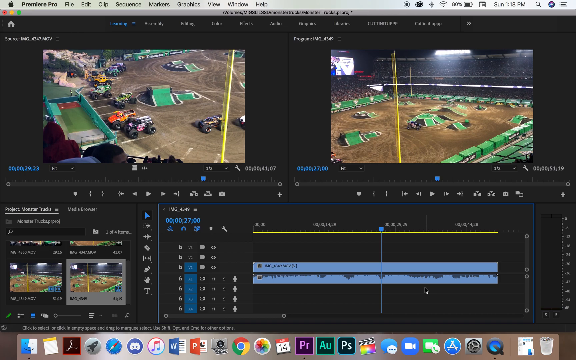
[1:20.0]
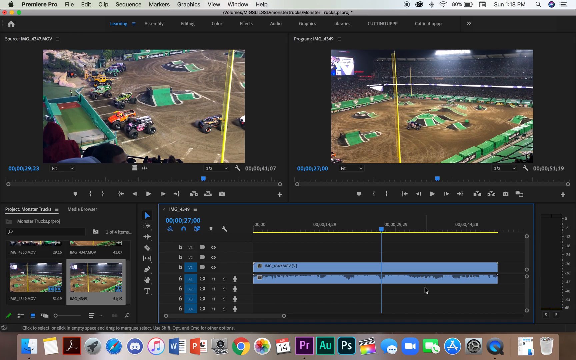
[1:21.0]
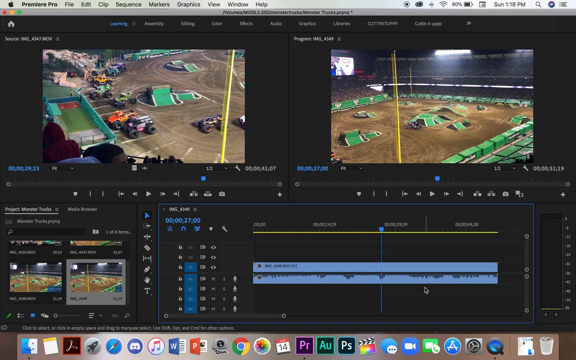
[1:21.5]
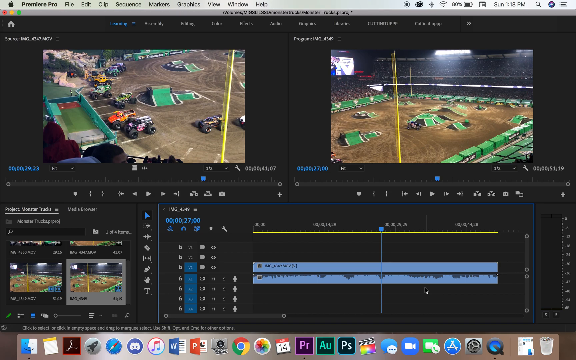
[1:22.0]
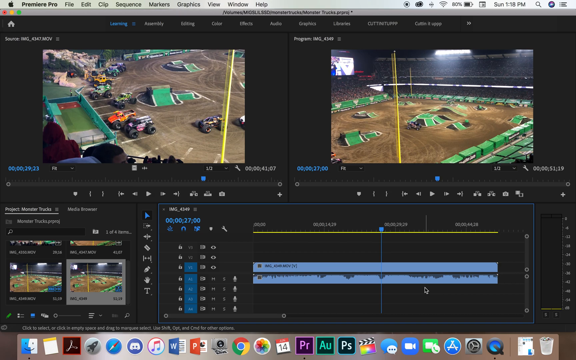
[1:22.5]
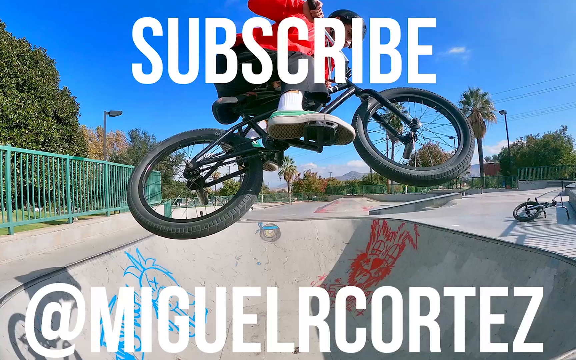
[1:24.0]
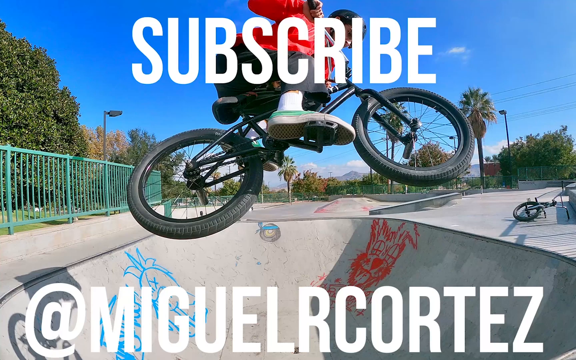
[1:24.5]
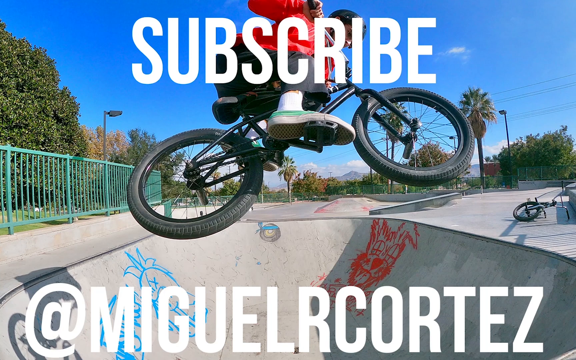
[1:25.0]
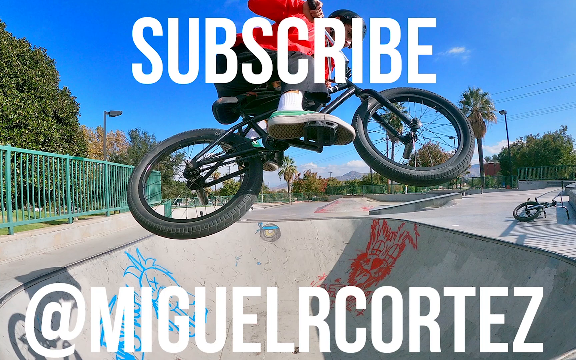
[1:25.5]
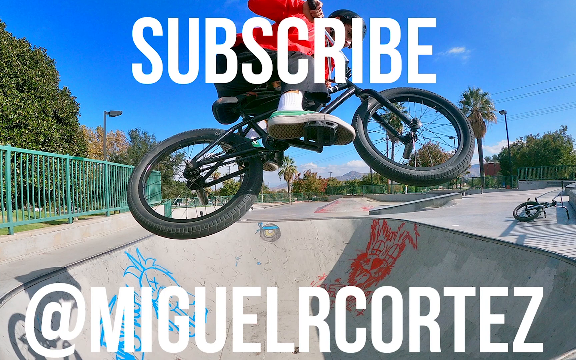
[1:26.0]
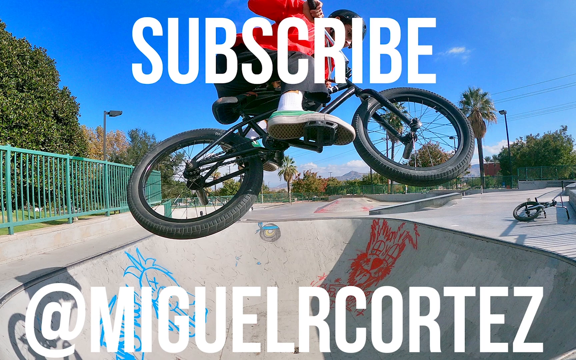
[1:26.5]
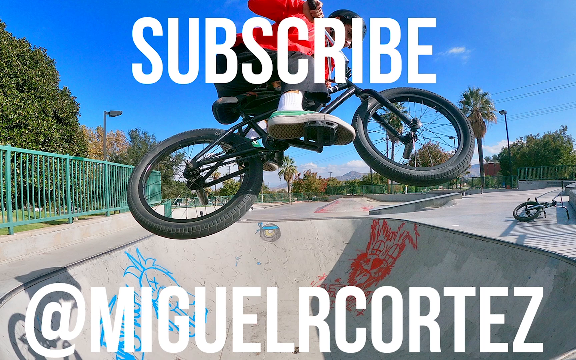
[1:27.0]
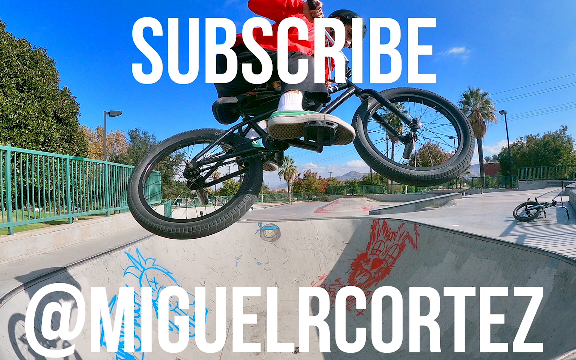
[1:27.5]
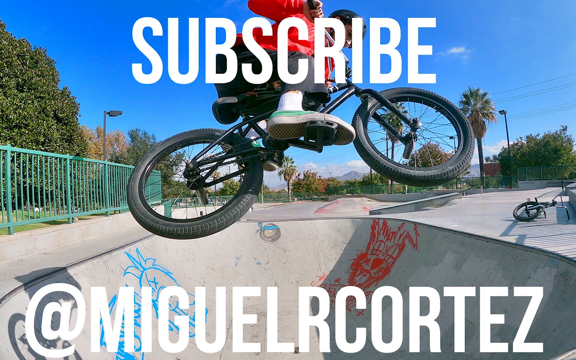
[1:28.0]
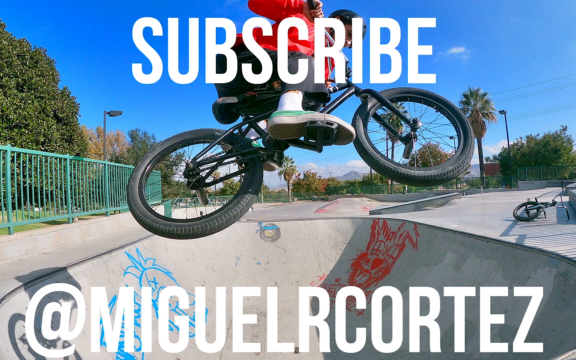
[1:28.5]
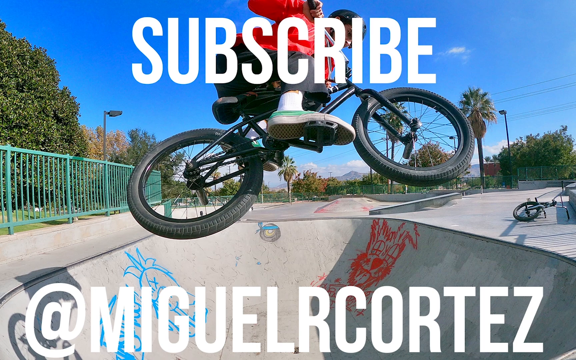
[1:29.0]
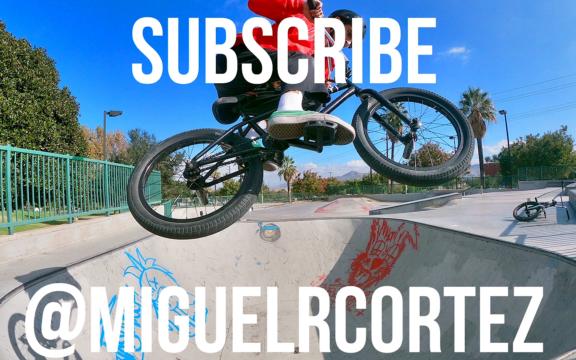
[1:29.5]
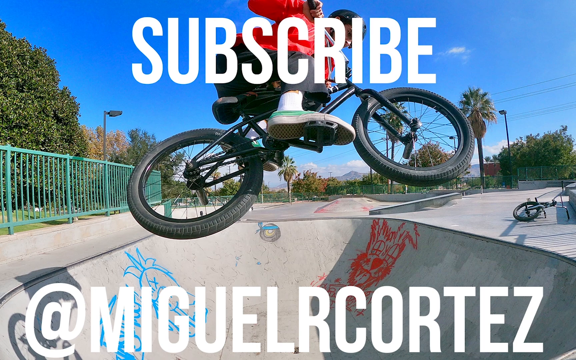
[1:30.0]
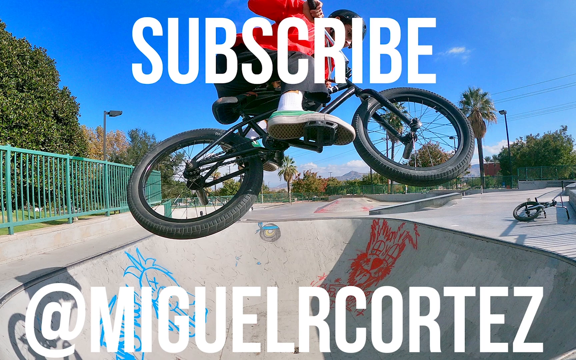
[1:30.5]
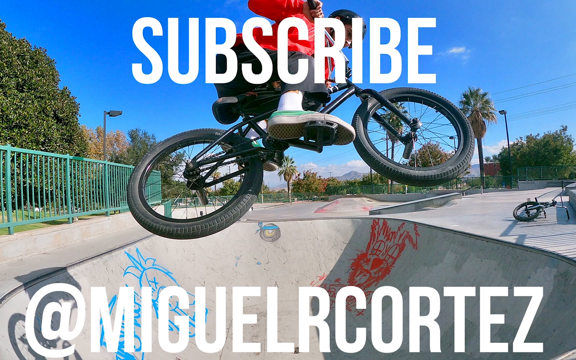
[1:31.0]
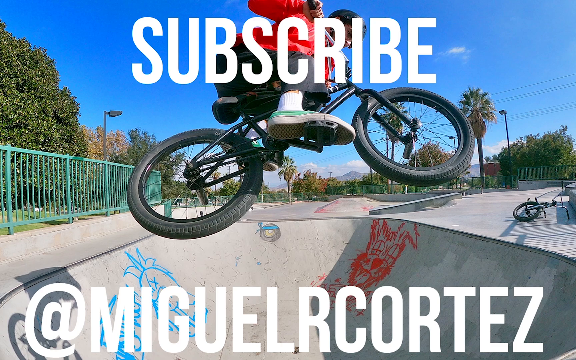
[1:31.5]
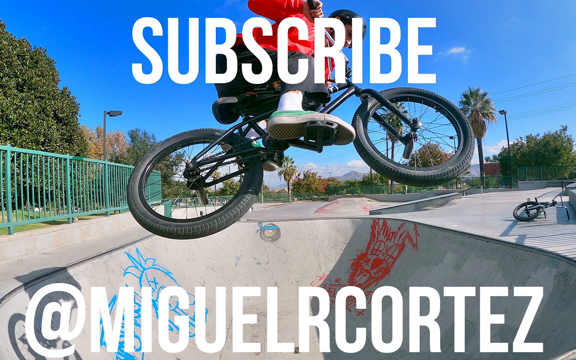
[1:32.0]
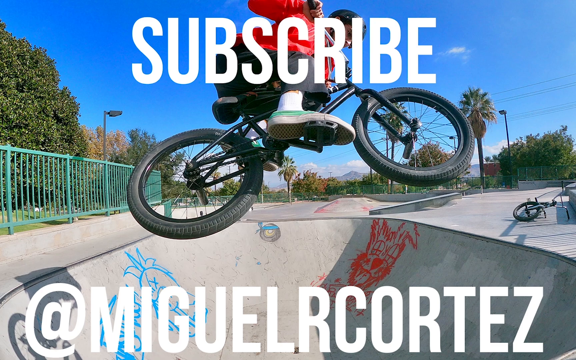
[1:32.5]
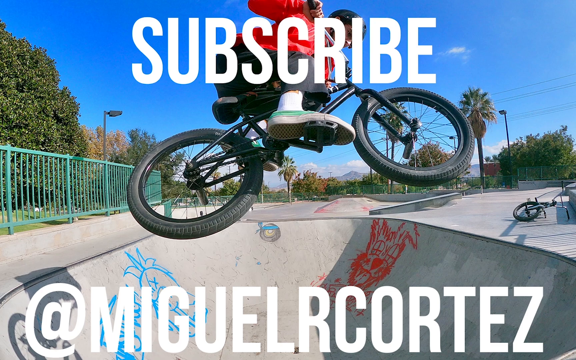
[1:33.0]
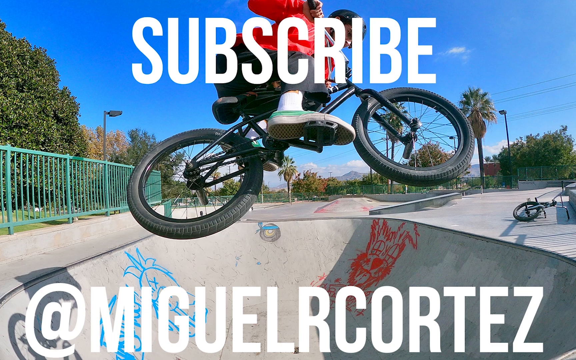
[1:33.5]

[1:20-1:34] The playing video is on the right-hand side, and both displays are in the lower left corner. The left-hand one is black and the right-hand one is white; the white one on the right seems to be the one playing, while the left-hand one is static and not moving. The video is accelerated forward from 29 to 33, and the volume levels, which were loud and going upward during the acceleration, drop back to zero. The last page reads "Subscribe" and shows "SUBSCRIBE IT'S MICHAEL L. COBBS".